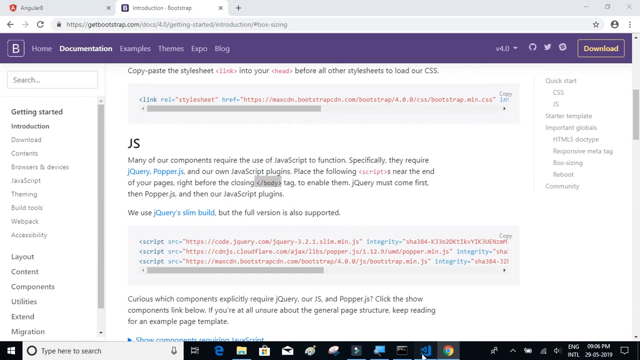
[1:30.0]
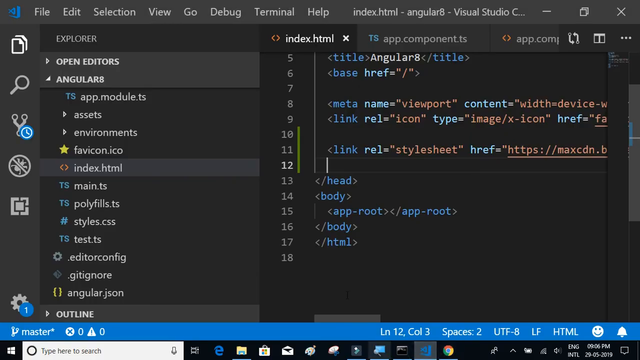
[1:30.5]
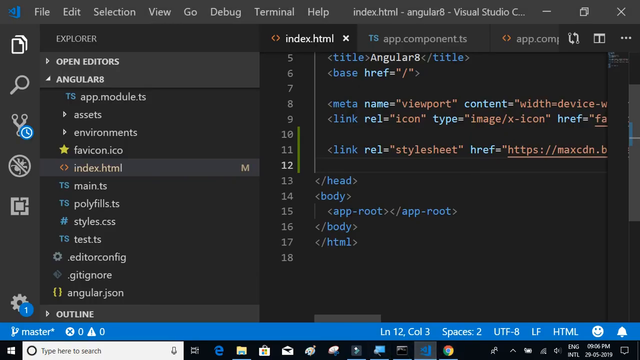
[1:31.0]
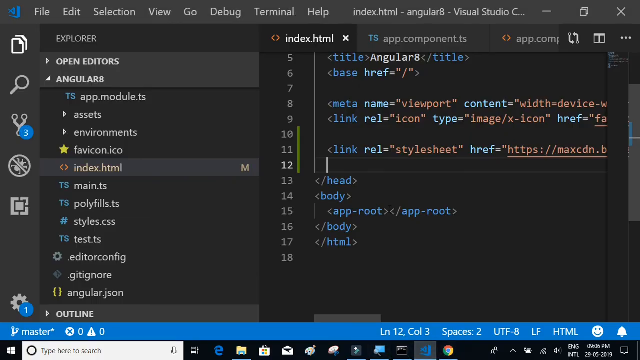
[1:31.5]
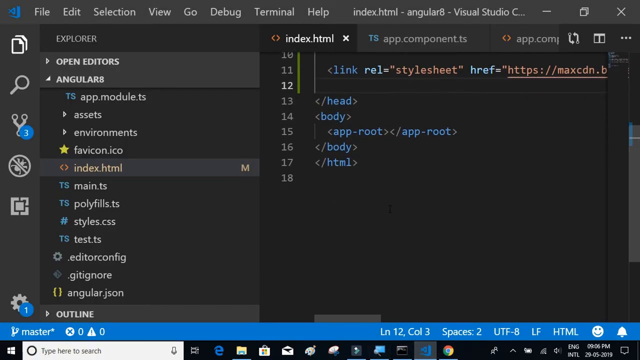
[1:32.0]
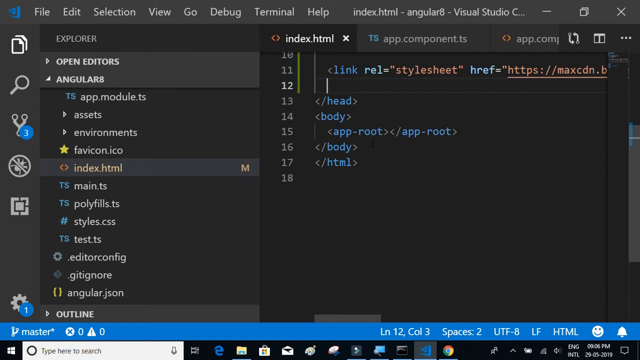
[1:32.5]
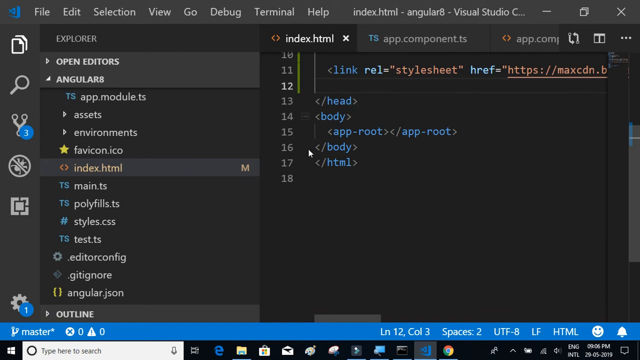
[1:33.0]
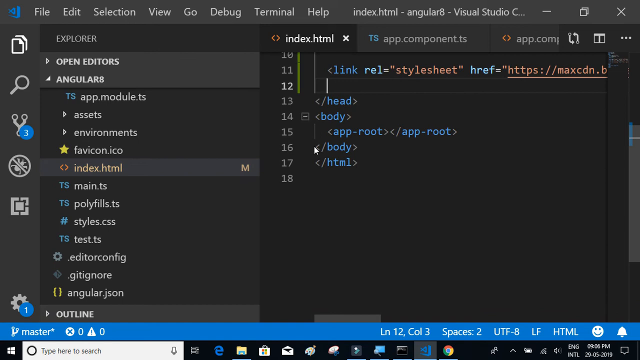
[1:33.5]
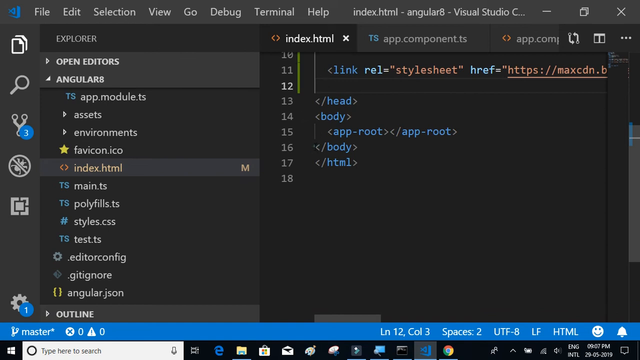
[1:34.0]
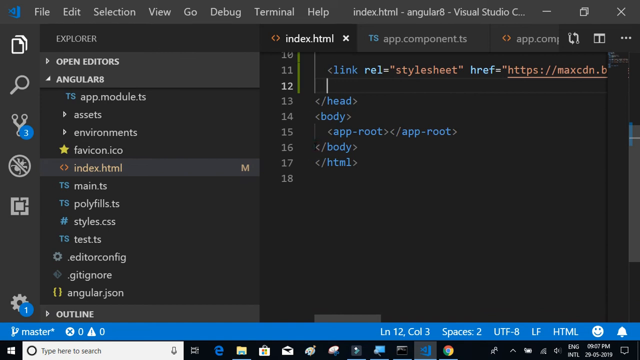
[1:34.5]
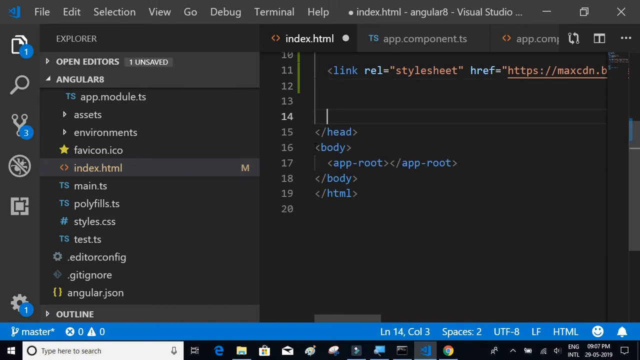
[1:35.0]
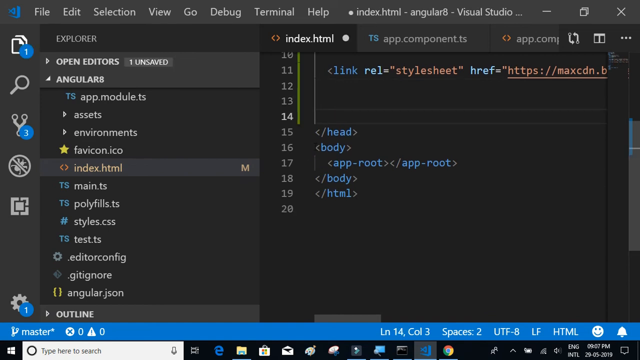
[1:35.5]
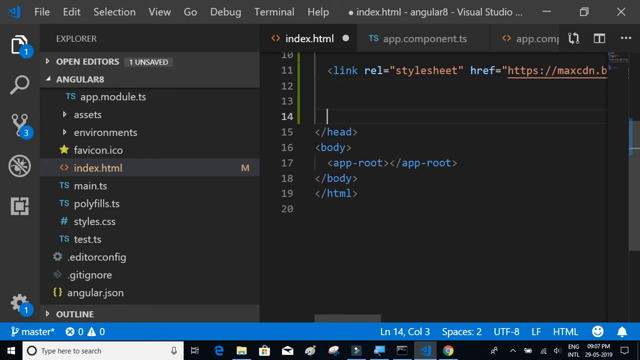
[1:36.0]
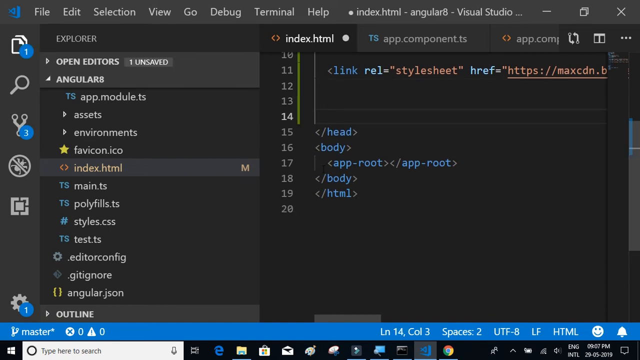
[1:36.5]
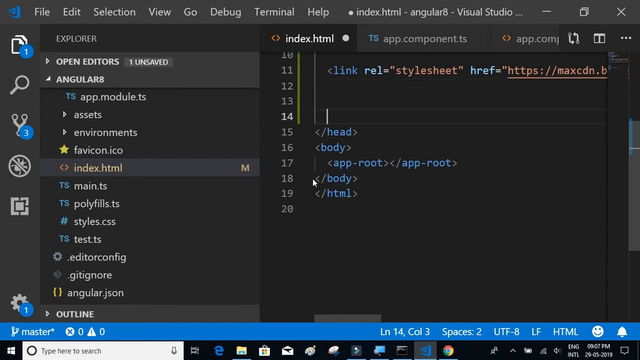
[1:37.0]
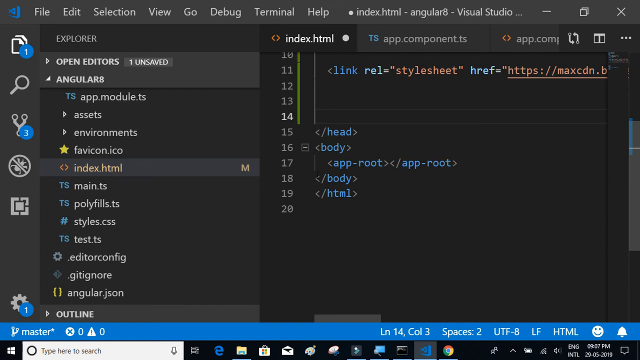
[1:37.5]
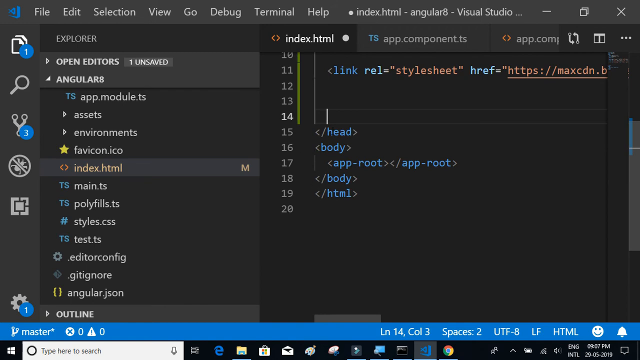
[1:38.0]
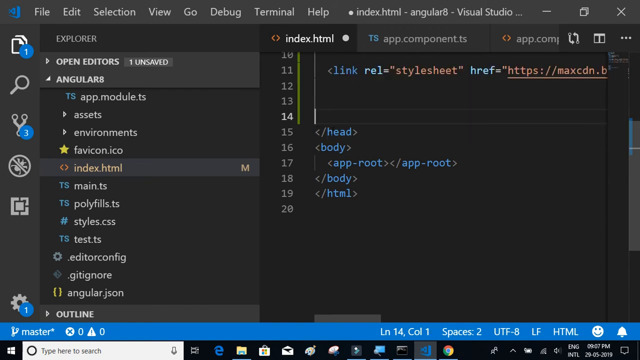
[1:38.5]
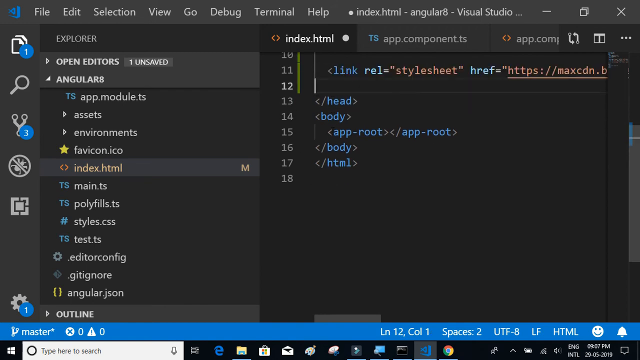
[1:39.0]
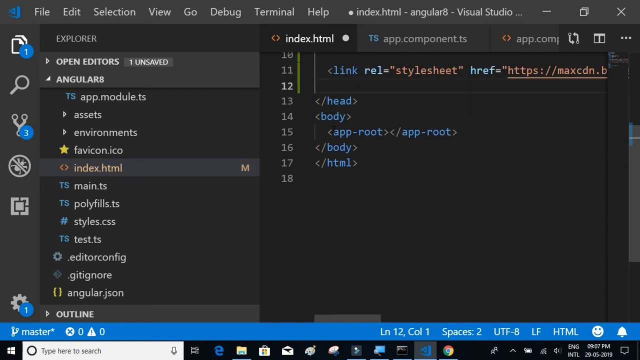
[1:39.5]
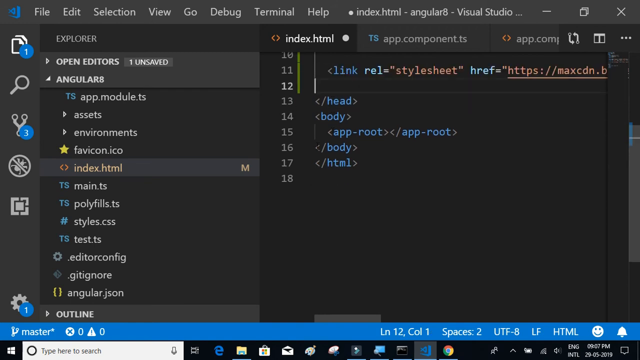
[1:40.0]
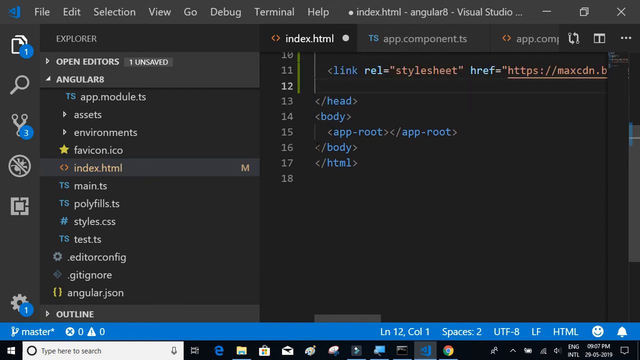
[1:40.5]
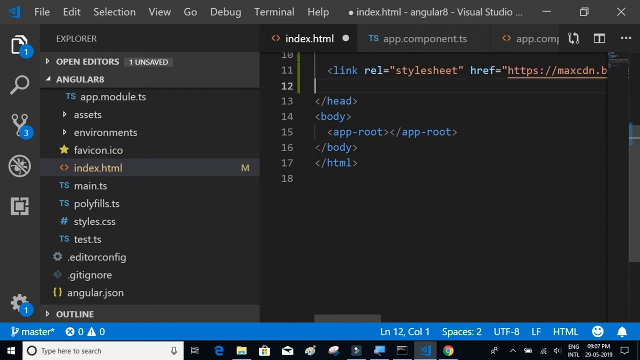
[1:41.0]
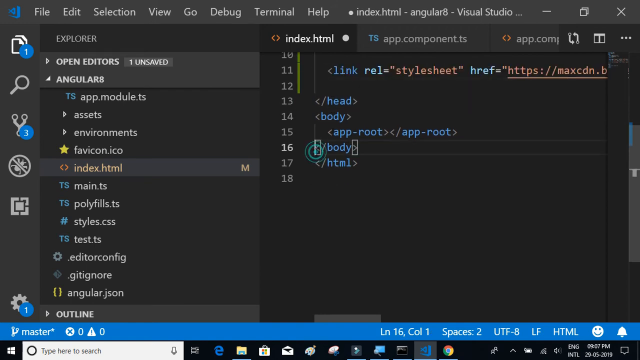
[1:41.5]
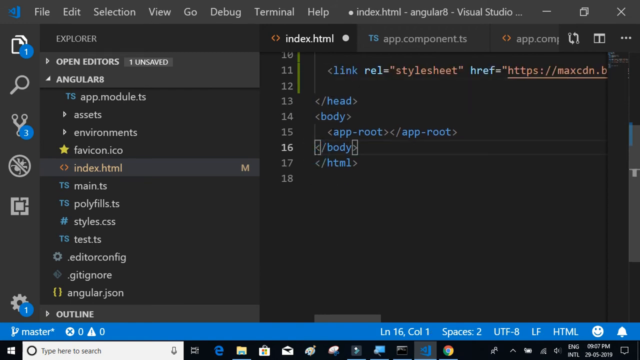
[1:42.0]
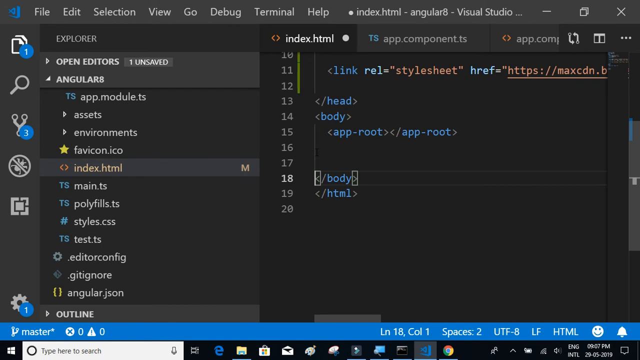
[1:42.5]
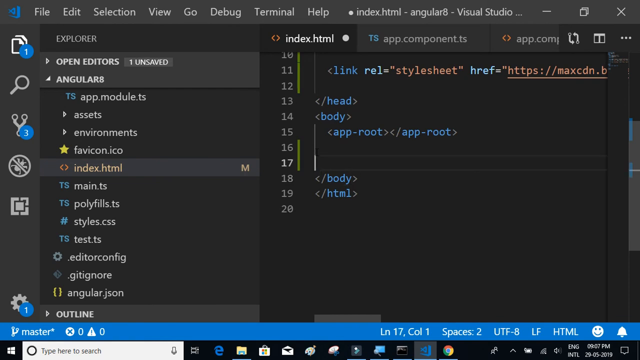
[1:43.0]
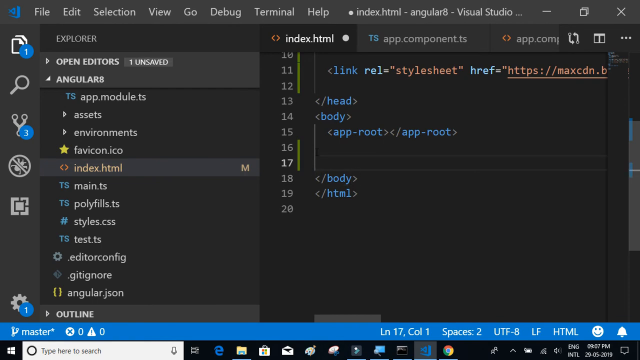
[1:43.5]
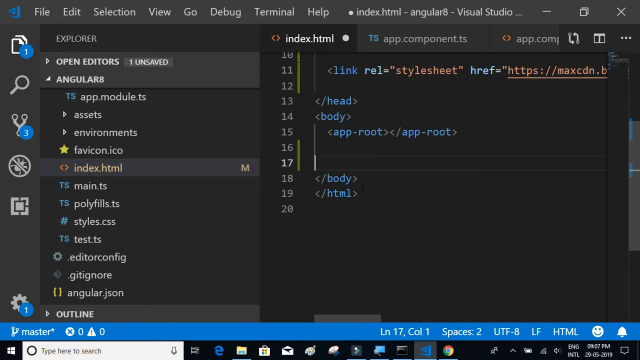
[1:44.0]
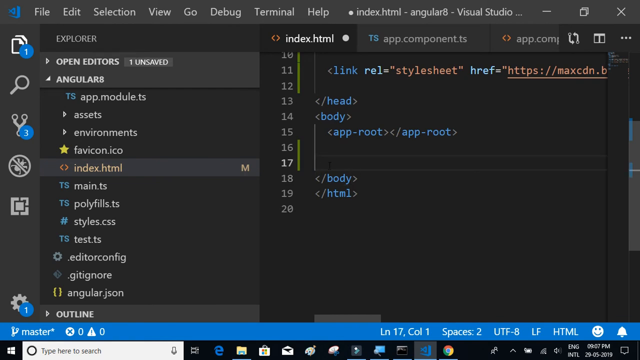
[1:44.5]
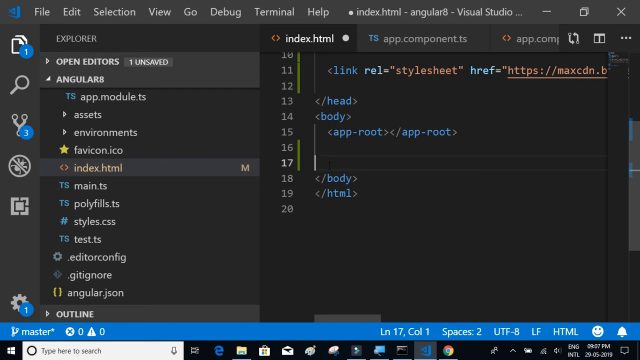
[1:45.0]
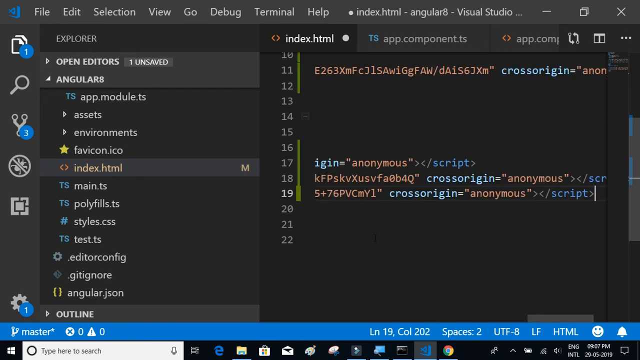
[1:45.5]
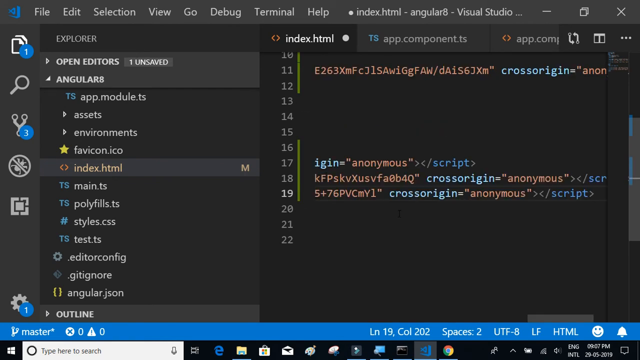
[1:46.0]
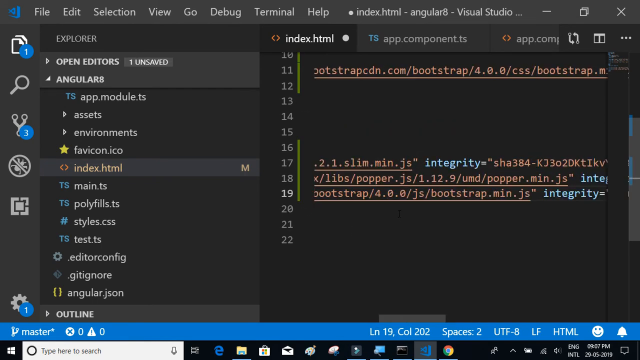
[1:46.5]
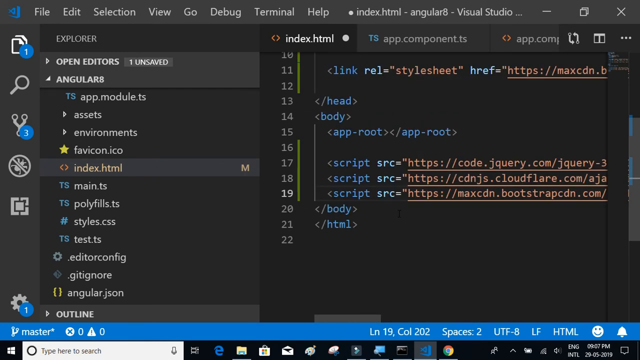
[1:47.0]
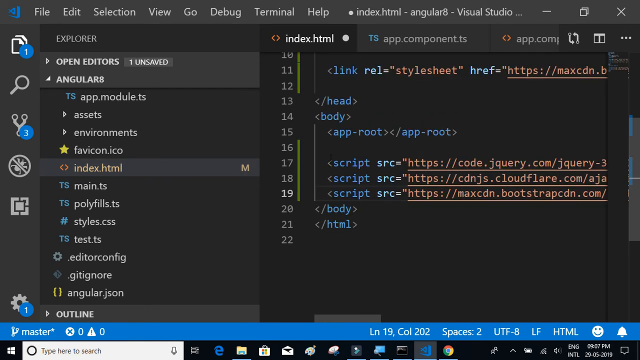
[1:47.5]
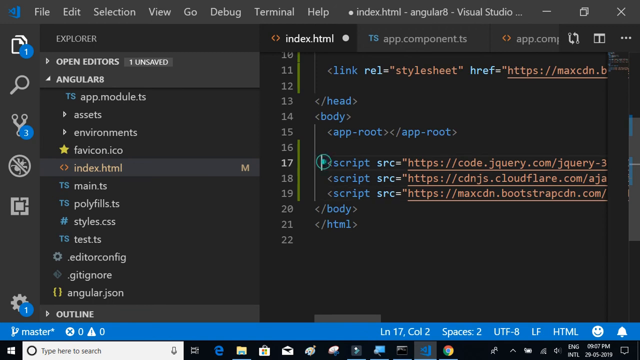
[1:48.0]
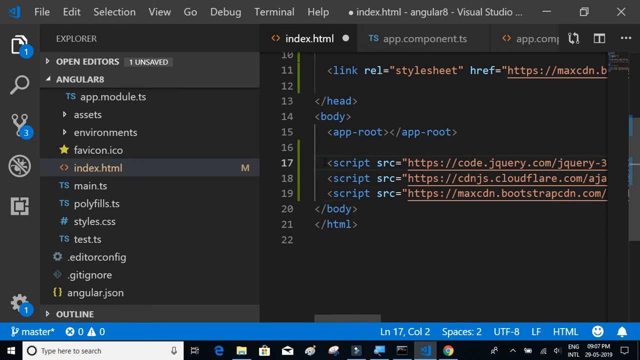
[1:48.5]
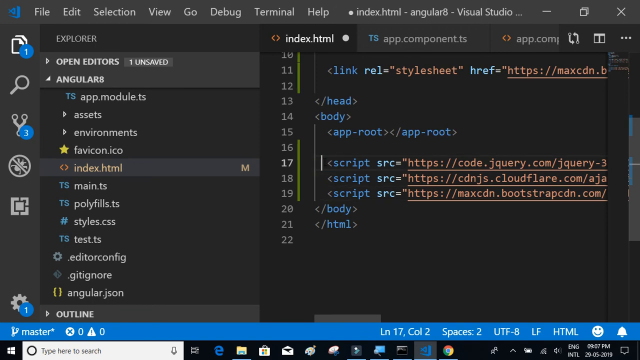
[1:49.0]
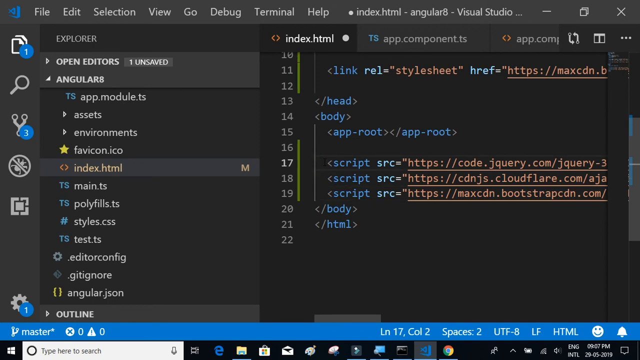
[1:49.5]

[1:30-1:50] A web page about bootstrap is open, and the user moves the cursor around and copies text that says "</body>", which is highlighted in gray. They quickly move to another page and, on lines 12, 13 and 14, put in a document with the web page attached. Different scripts are written in that area. The JS section reads: "many of our components require the use of JavaScript to function. Specifically, they require jQuery, popper.js, and our own JavaScript plugins. Place the following script near the end of your pages right before the closing body tag to enable them. jQuery must come first, then popper.js, and then our JavaScript plugins. We use jQuery slim build, but the full version is also supported."